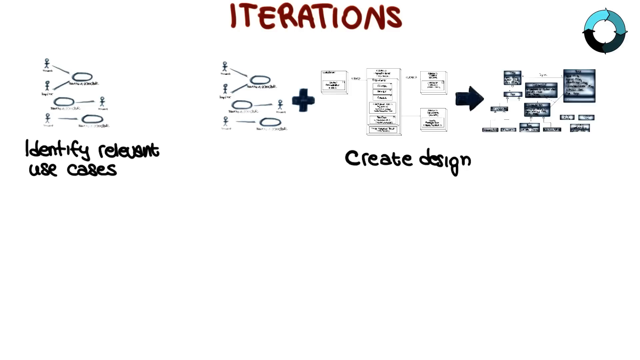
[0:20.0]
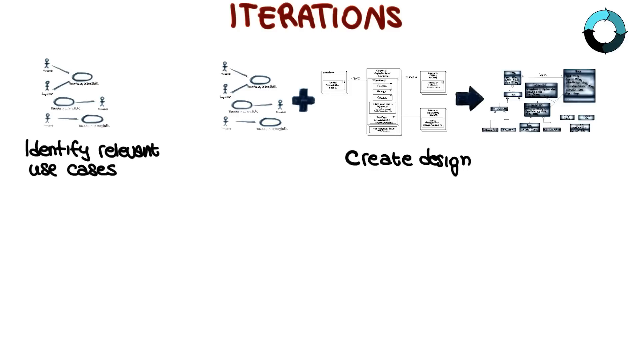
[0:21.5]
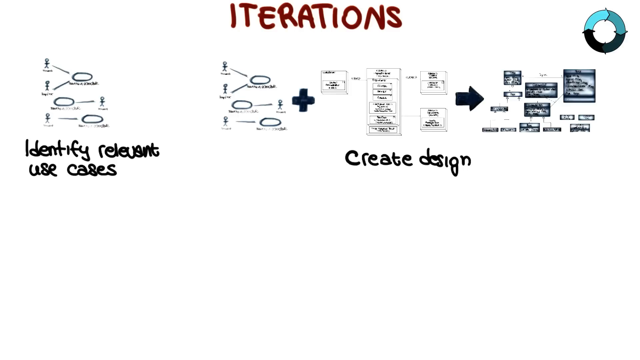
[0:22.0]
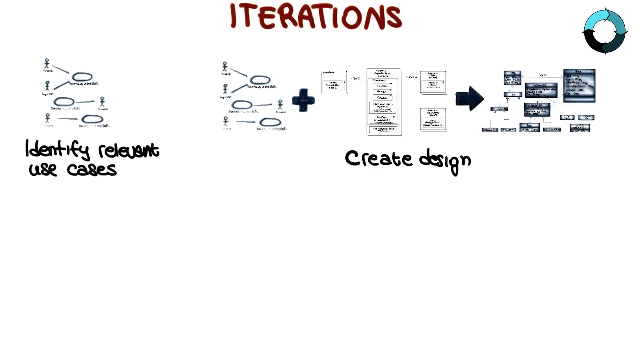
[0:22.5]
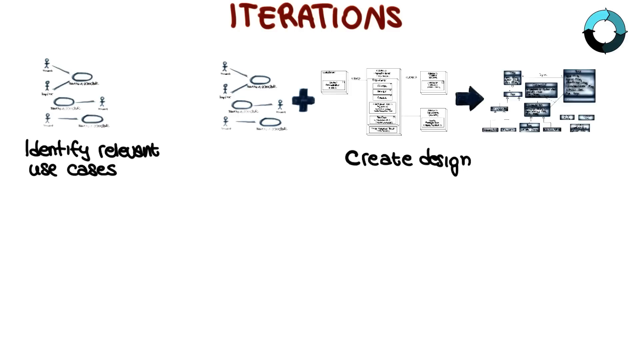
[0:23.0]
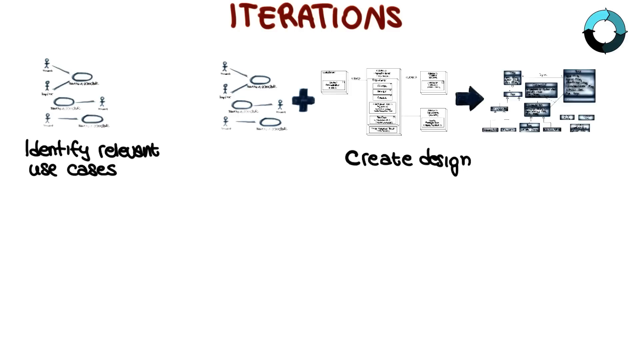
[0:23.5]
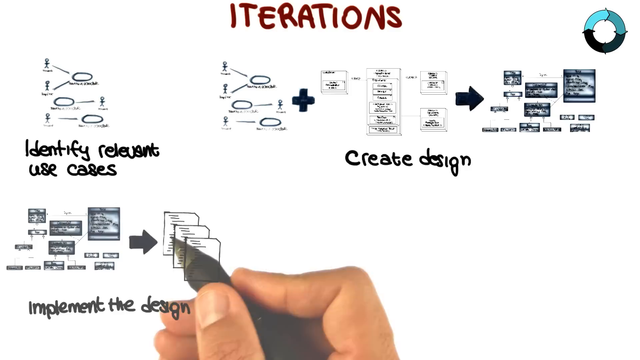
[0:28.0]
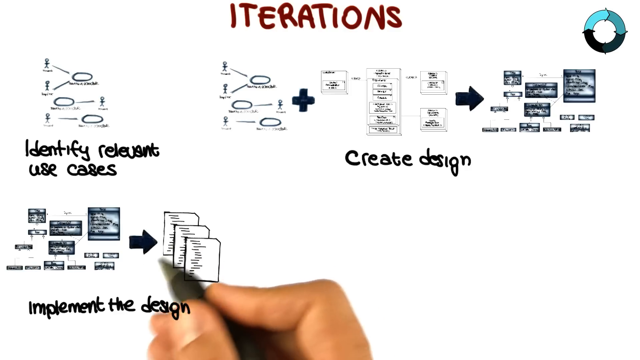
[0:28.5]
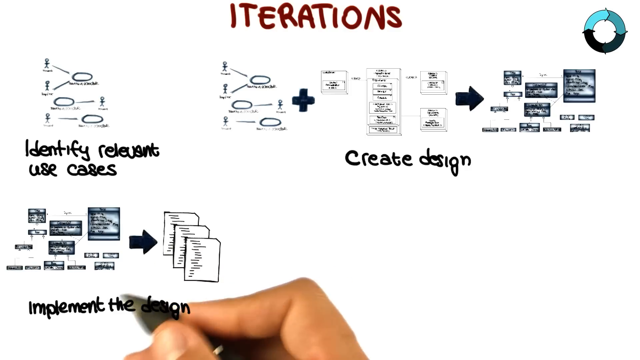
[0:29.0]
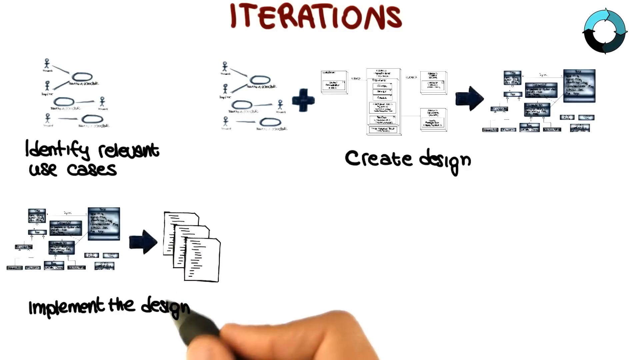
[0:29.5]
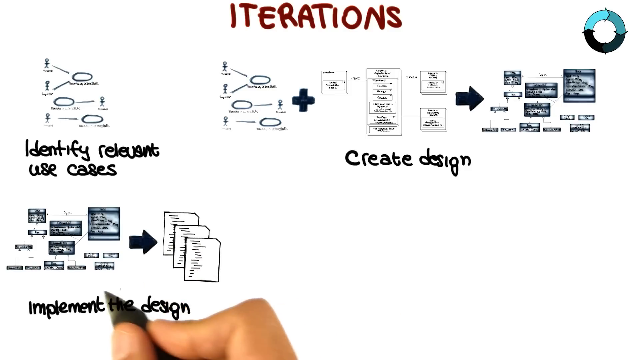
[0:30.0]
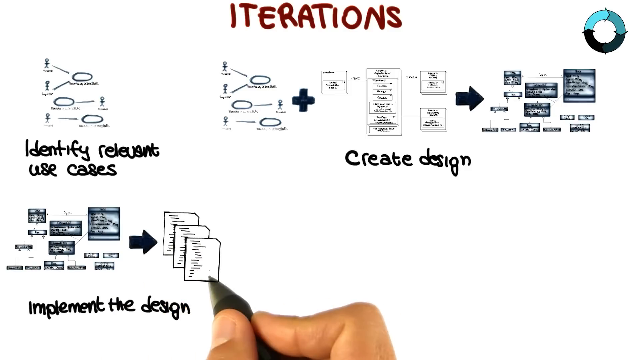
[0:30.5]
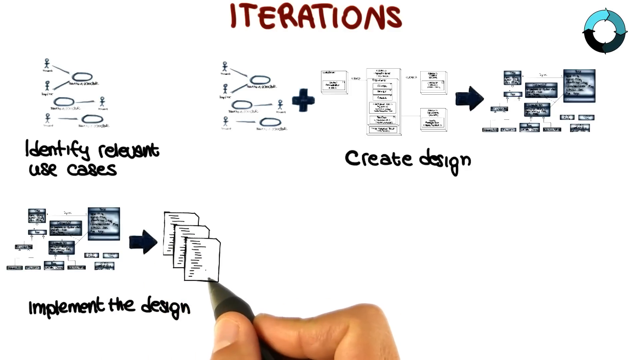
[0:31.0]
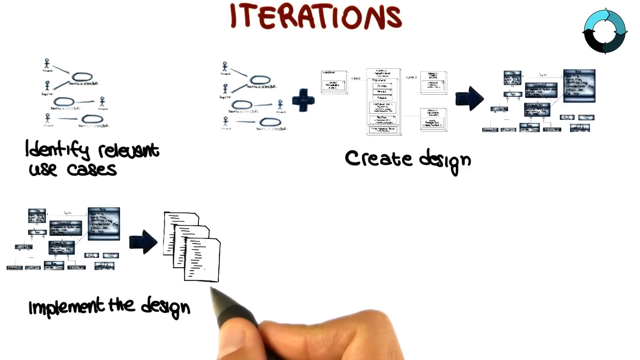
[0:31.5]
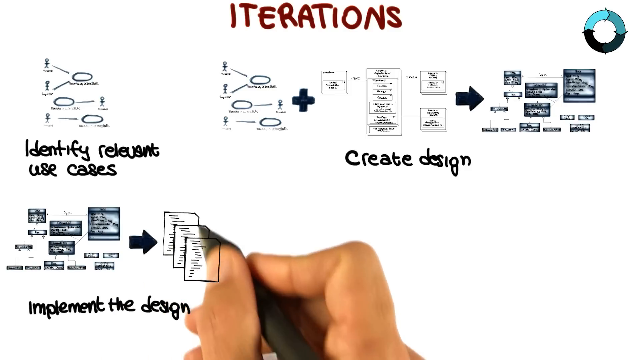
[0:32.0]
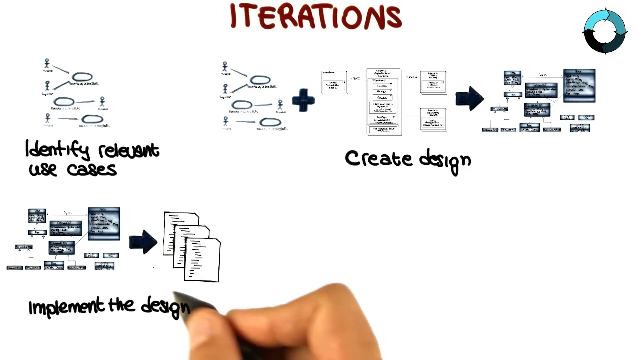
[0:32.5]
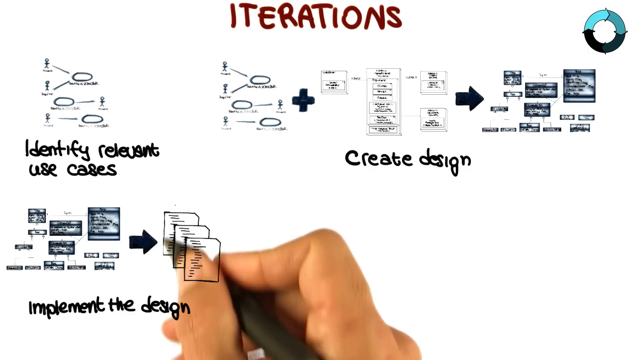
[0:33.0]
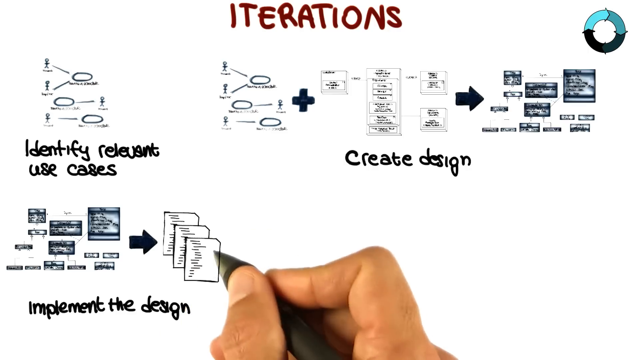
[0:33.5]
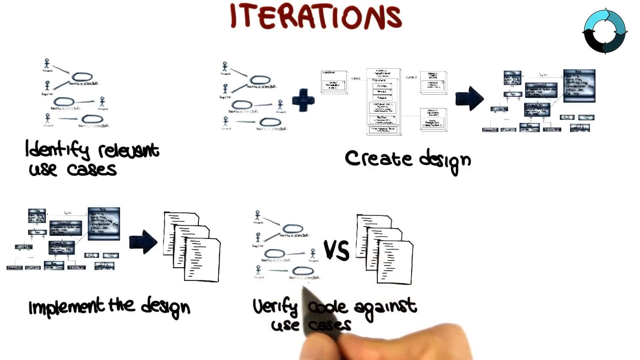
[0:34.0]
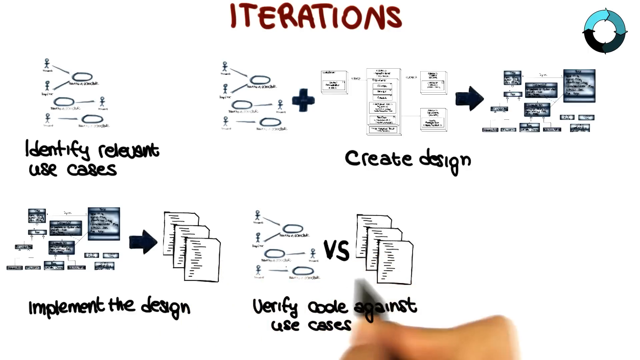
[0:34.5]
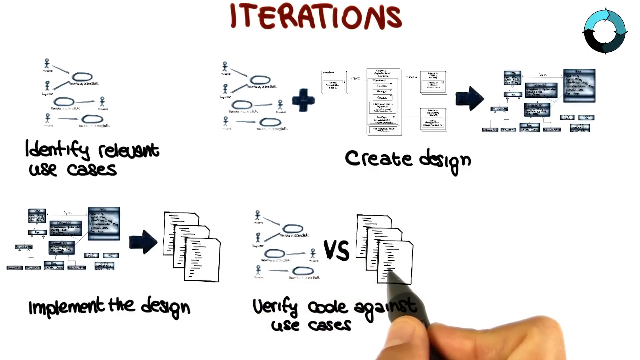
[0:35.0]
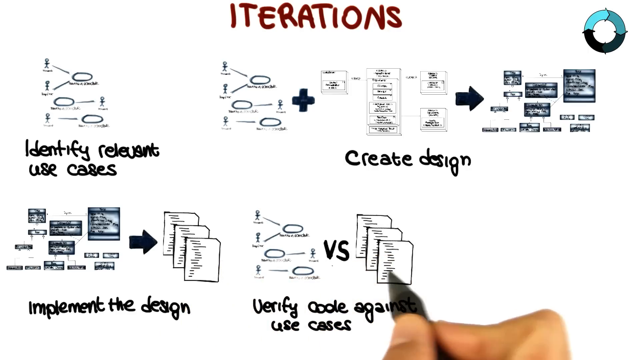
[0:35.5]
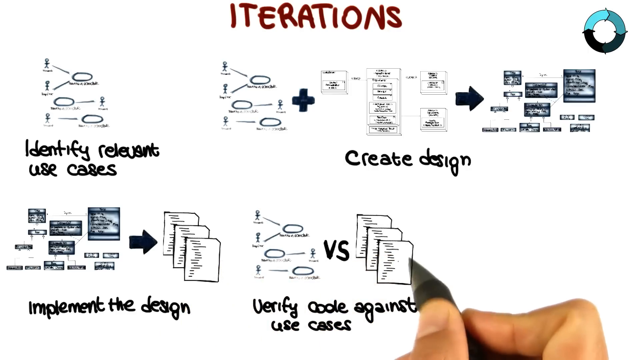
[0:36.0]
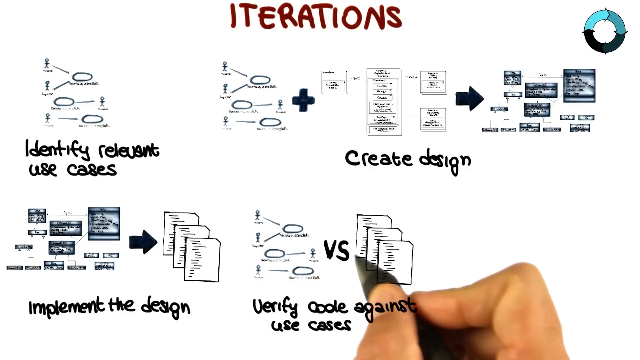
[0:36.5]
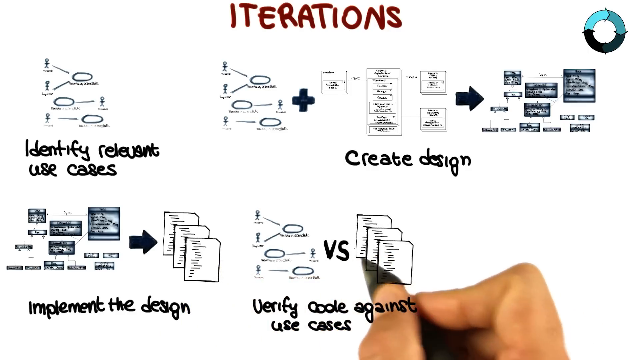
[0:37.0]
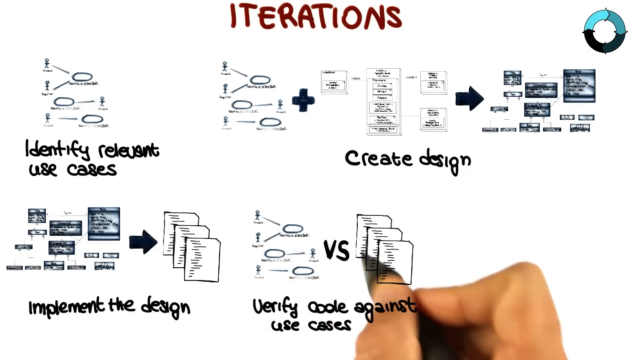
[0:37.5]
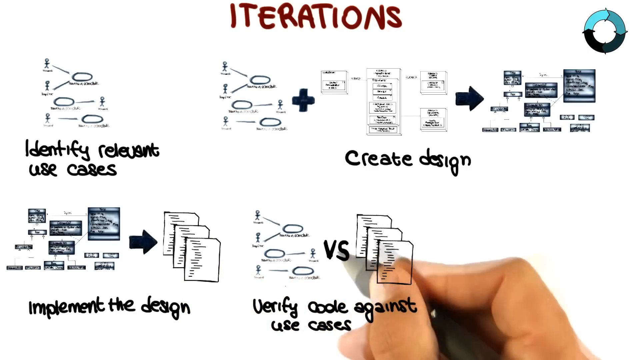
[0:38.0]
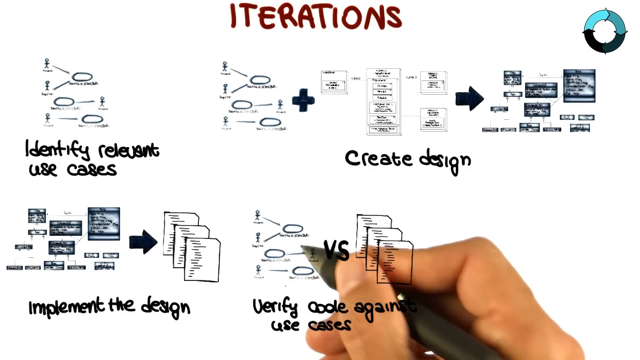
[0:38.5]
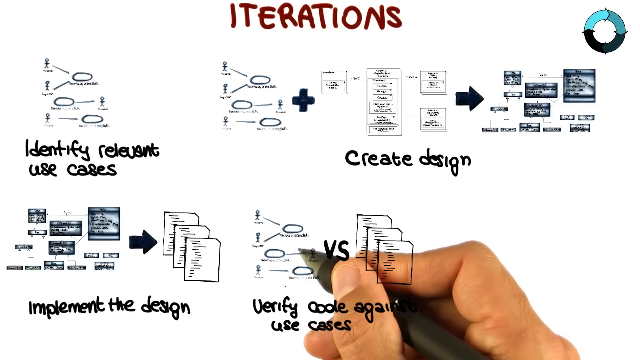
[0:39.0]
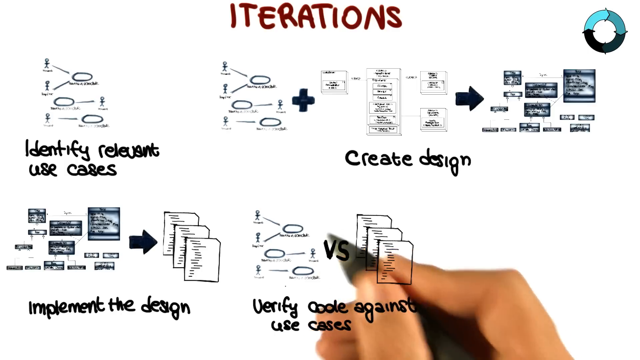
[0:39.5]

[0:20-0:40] The two diagrams, one about identifying relevant use cases and one about creating a design, stay on the screen for a while with nothing else happening. In the top right corner is a circle made up of three or four arrows in different shades of blue, going from lighter to darker to darkest, like a cycle. A third image then joins them in the bottom left, incorporating the end of the second image so that they form a flow. It is labeled in handwriting "implement the design," and the hand holding the touchscreen pen hovers around it, making a circular motion. Another image then appears that uses two elements from two of the previous images, labeled "verify code against use cases" in the same handwriting style in black ink. The hand moves around it, motioning and indicating.